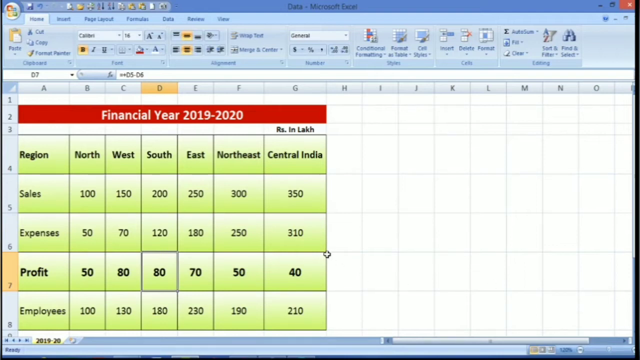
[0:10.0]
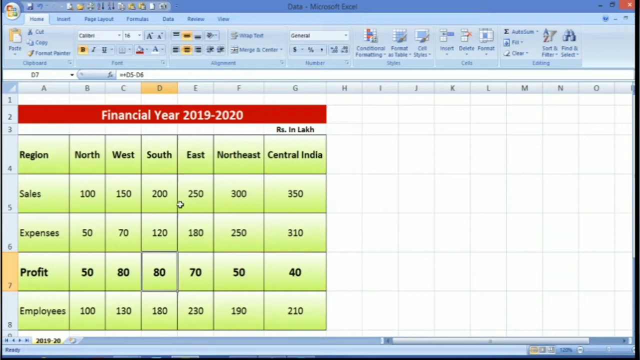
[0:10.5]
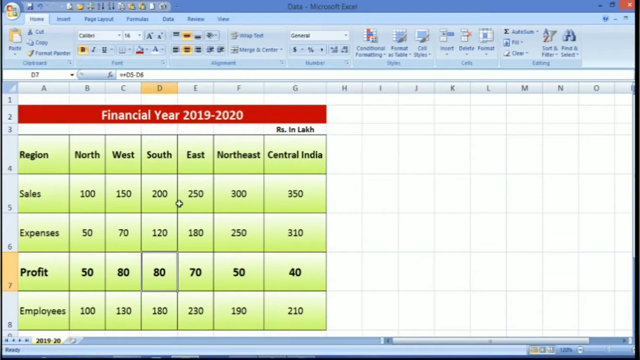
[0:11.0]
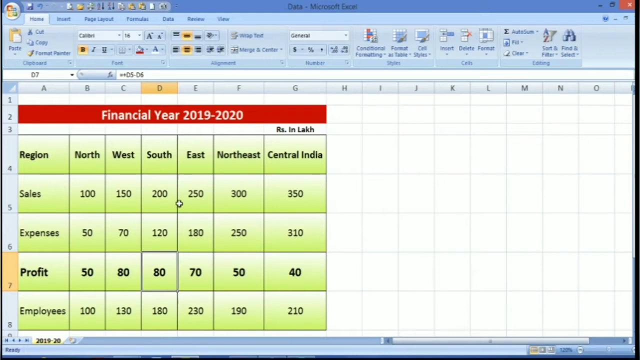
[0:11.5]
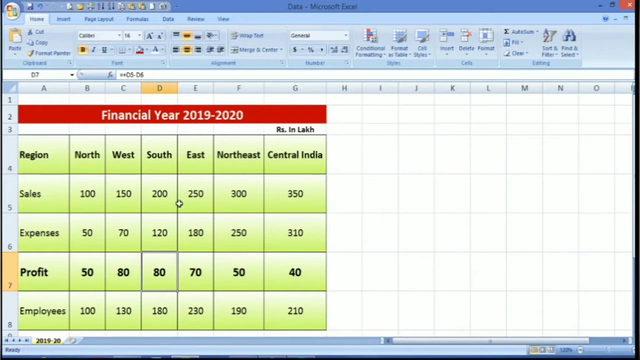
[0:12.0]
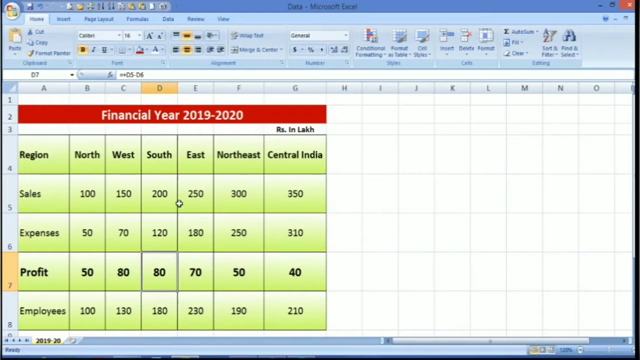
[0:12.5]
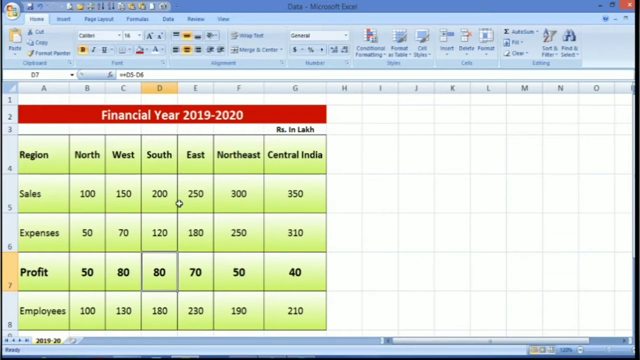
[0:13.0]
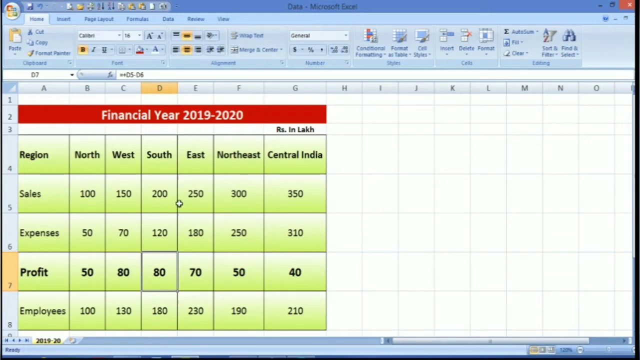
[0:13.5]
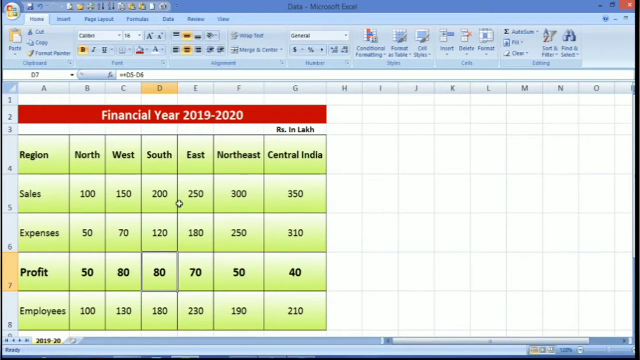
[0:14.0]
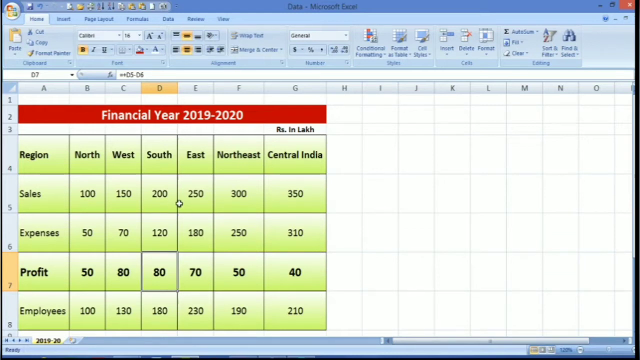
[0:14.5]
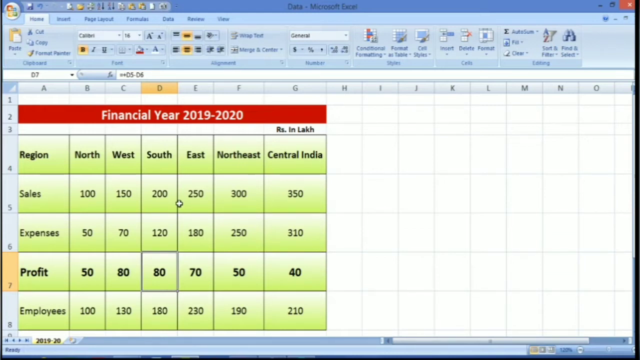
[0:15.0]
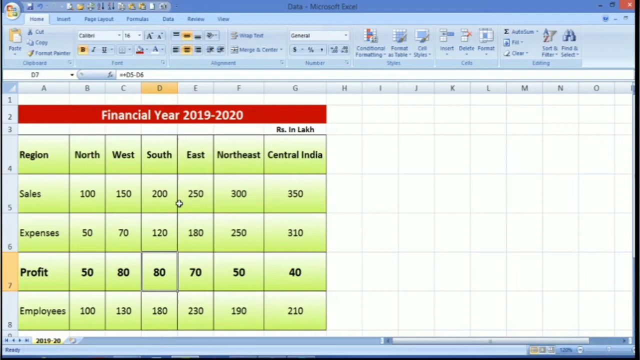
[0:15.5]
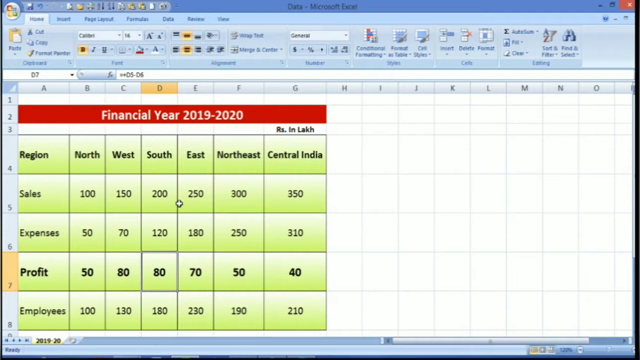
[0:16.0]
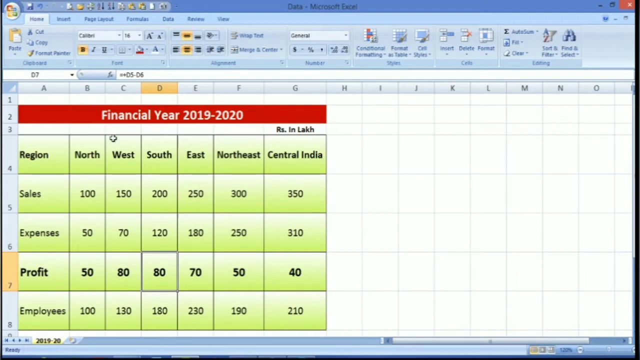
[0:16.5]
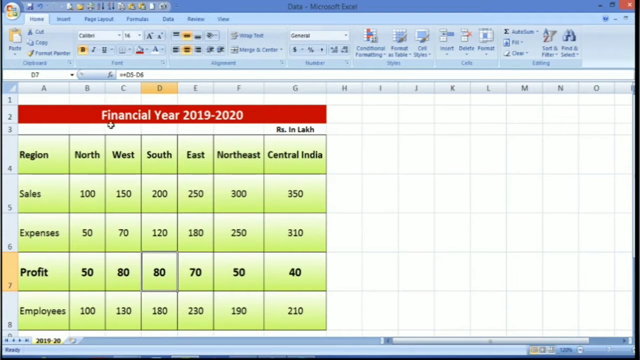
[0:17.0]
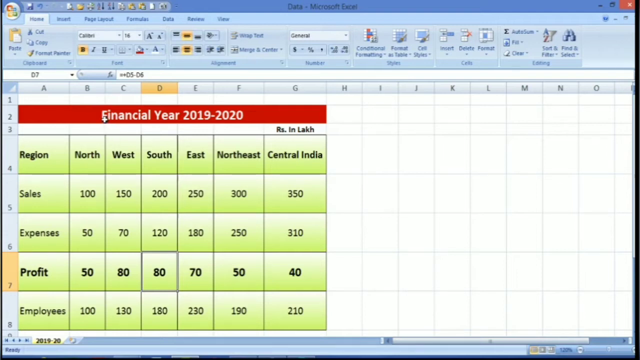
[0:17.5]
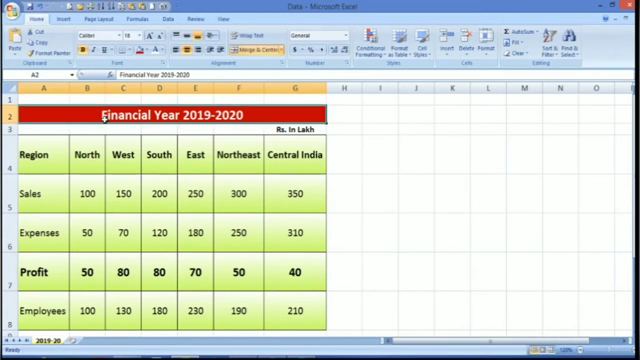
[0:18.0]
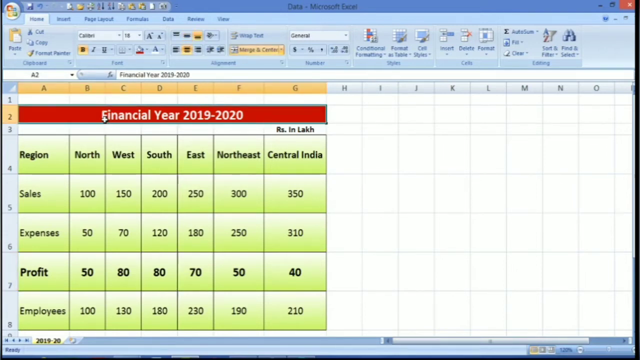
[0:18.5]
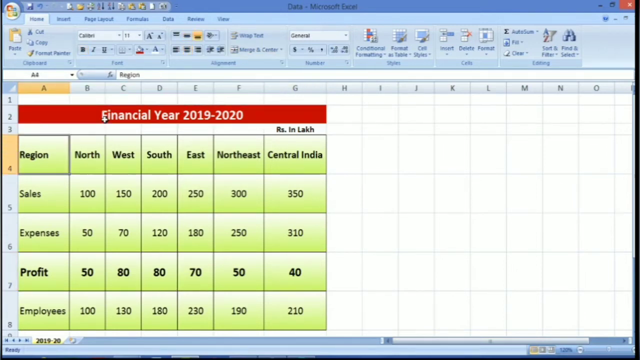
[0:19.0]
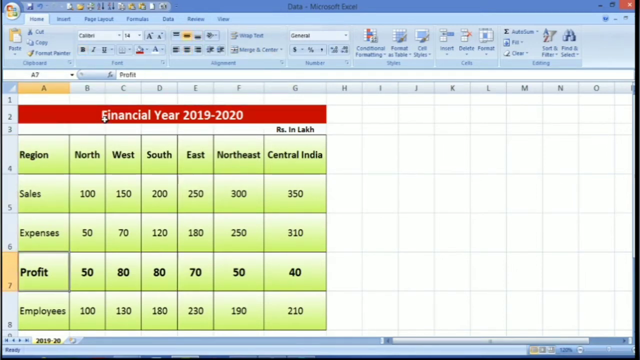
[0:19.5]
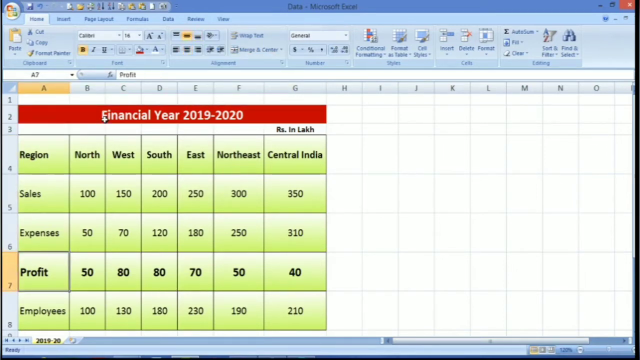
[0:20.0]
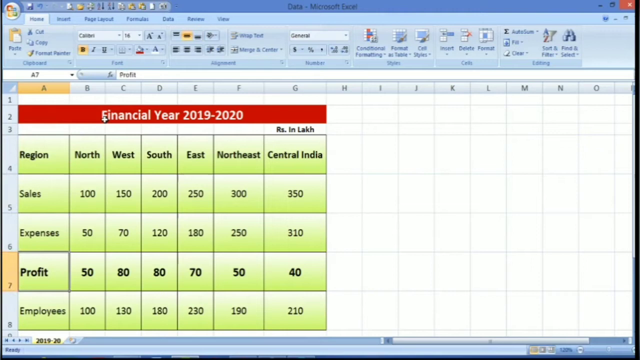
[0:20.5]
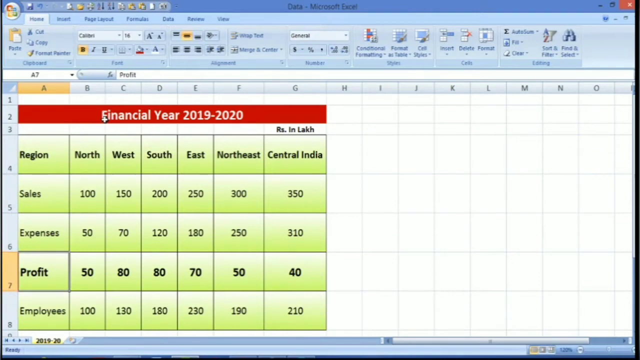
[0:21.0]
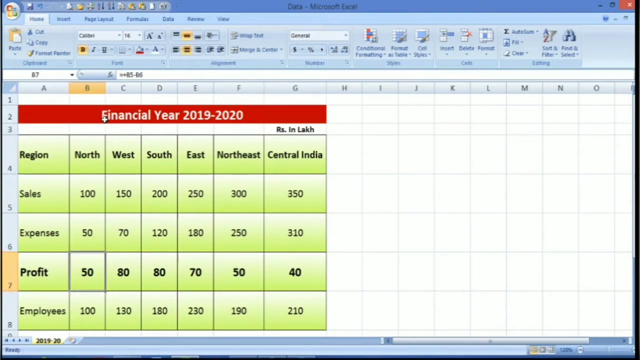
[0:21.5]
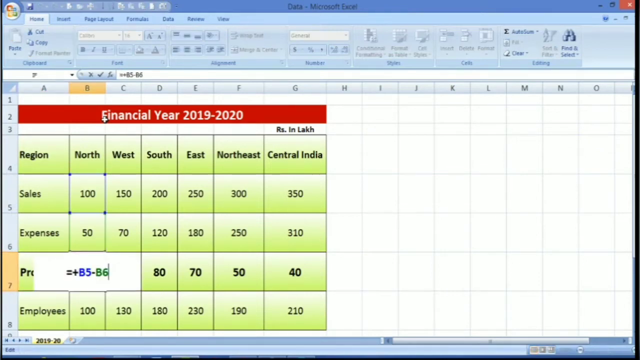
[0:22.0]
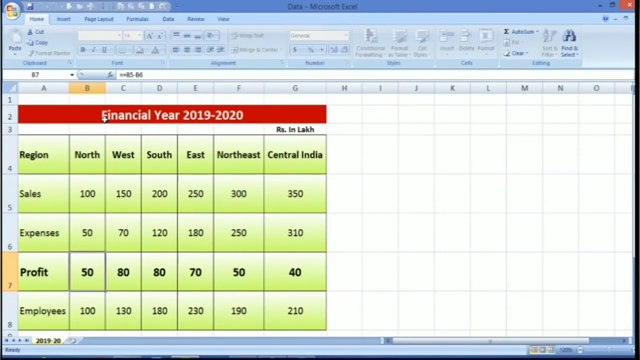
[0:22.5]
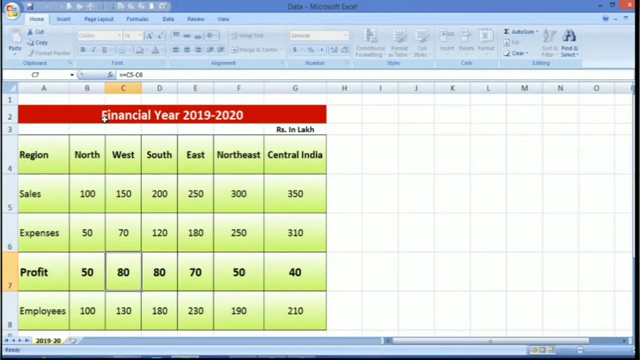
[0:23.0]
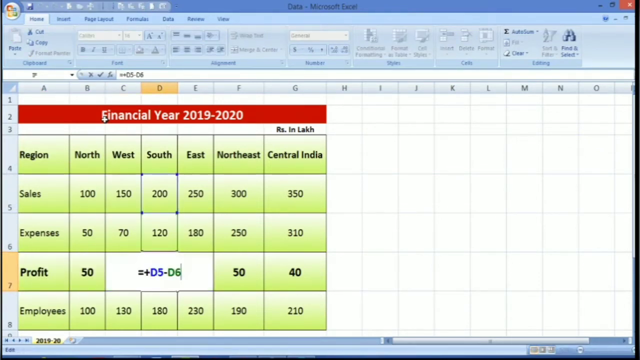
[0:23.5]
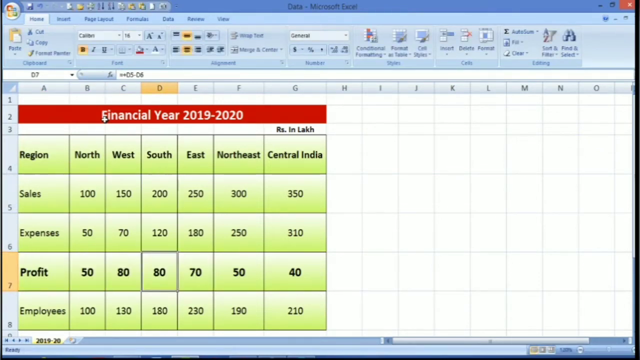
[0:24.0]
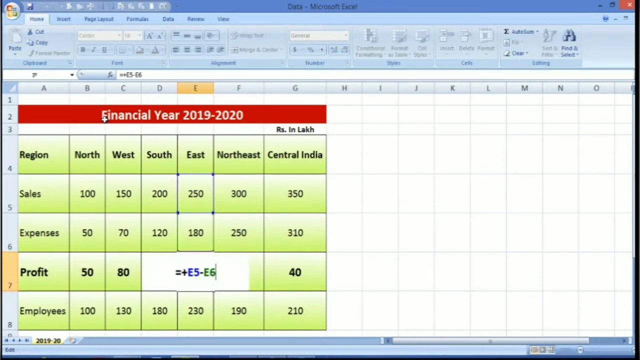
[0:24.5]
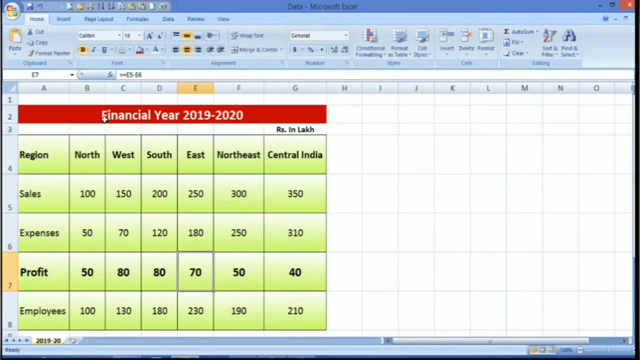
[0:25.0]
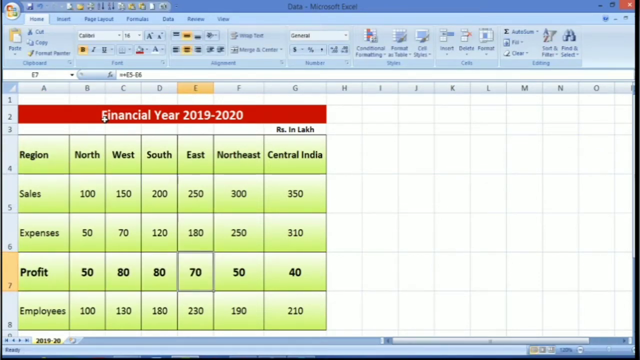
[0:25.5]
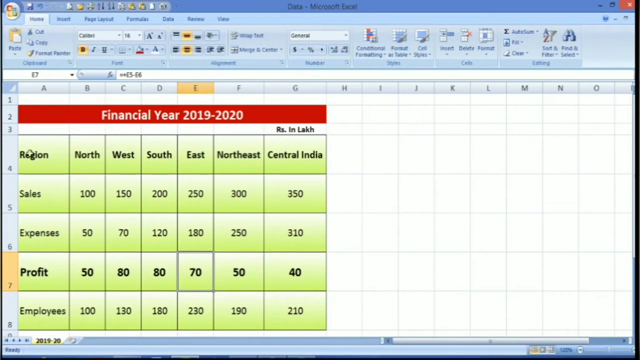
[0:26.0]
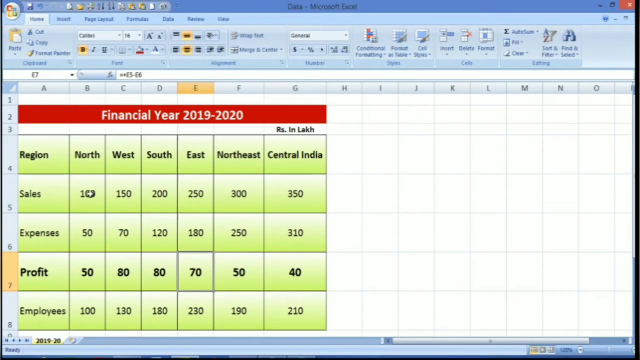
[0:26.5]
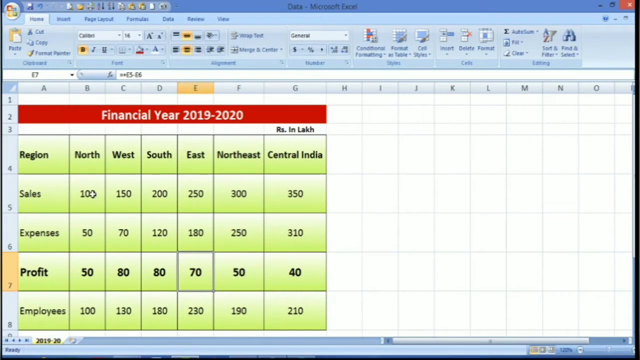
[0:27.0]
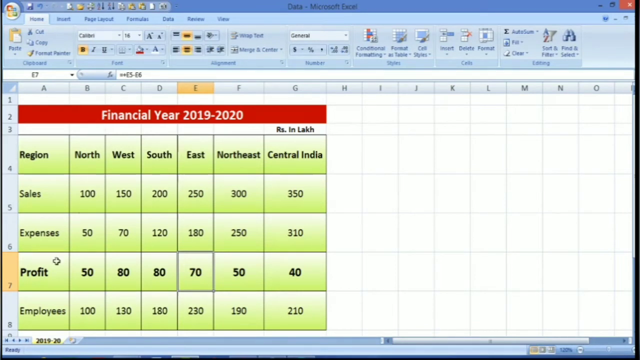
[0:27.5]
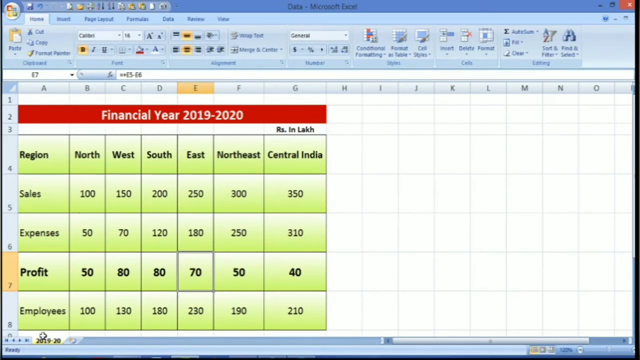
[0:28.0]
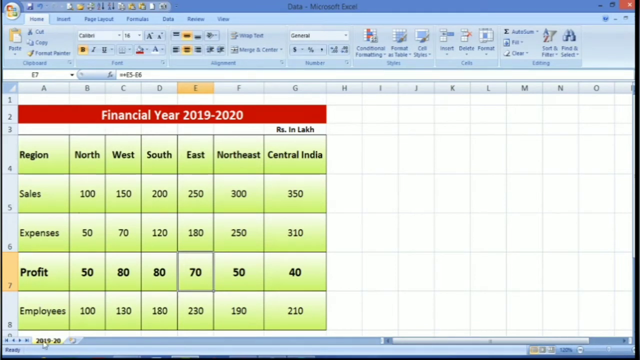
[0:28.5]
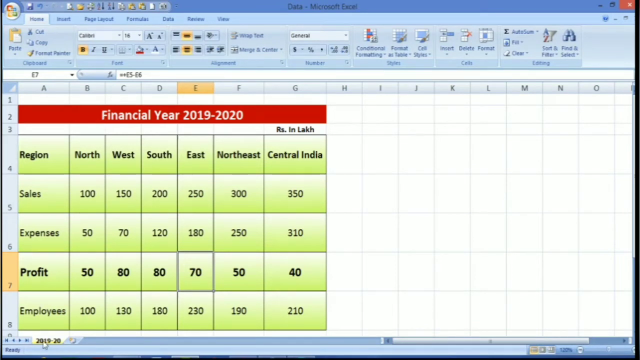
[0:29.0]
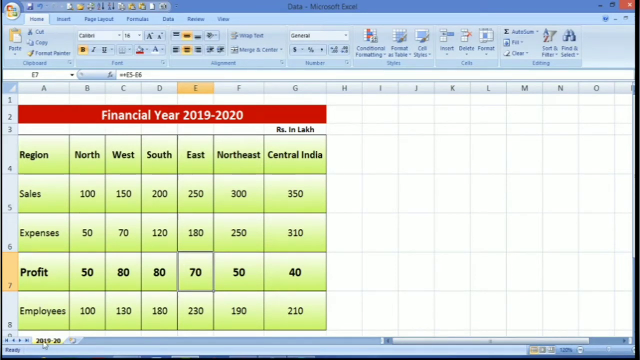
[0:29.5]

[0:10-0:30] What looks like a modern version of Microsoft Excel is open, with the sheet at the top titled "data". In the work area, a red title banner runs left to right in row two and extends through column G, reading "financial year 2019 to 2020" in white text, with a small graph below it. The graph reads "region", with sales, expenses and profit as rows and northwest, southeast, northeast and central India as columns, and values are filled in. The selection arrows down the rows on the left, the row numbers changing from one through the bottom row. It then arrows across the profit area, exposing different formulas along the way. Finally it moves down to the tab at the bottom, and hovering over the tab reveals the exact date typed into it for this sheet.